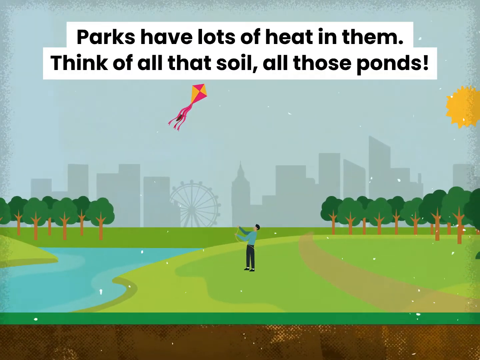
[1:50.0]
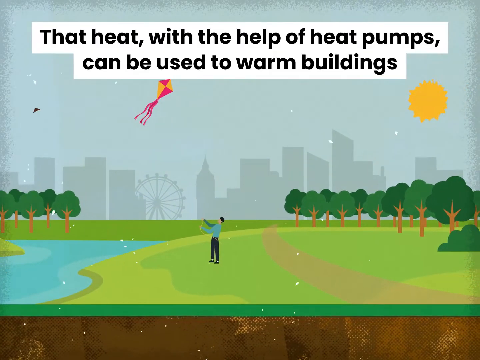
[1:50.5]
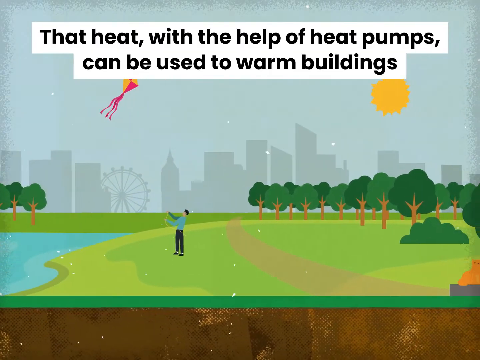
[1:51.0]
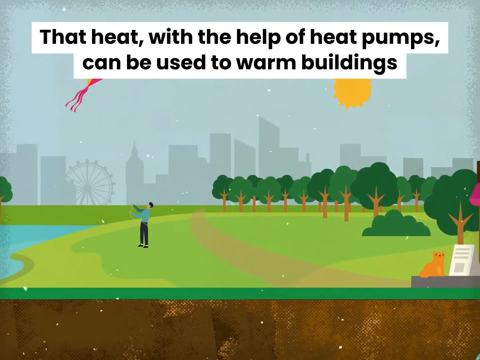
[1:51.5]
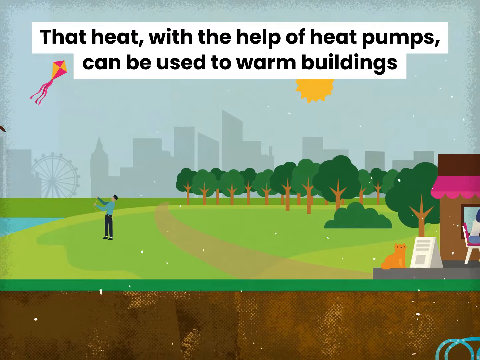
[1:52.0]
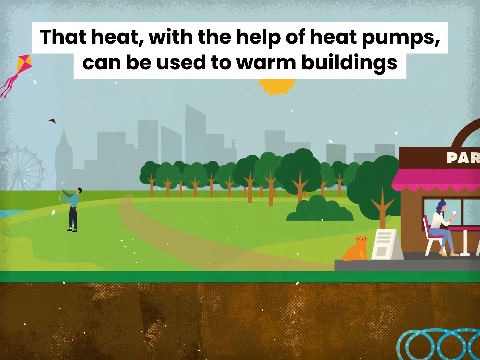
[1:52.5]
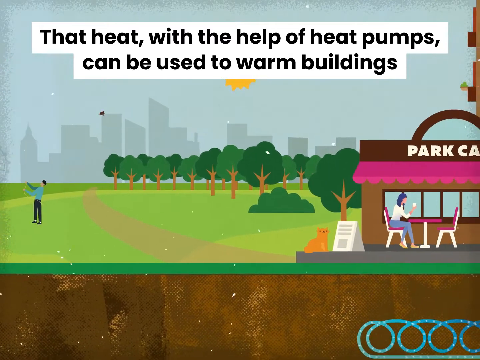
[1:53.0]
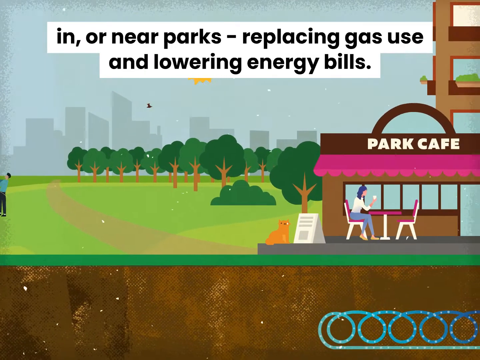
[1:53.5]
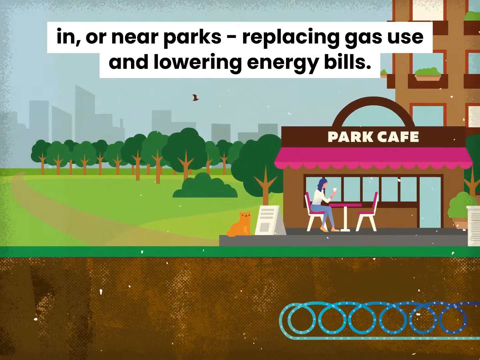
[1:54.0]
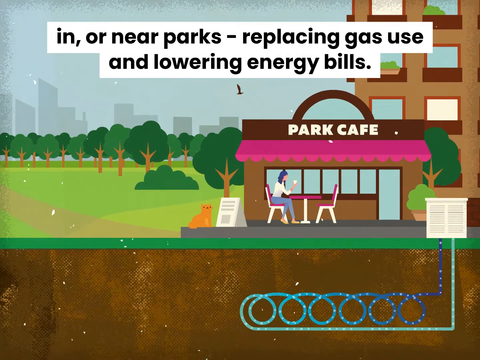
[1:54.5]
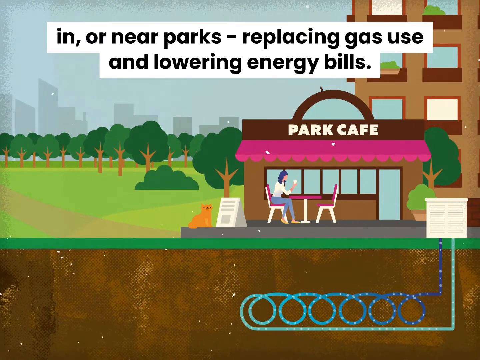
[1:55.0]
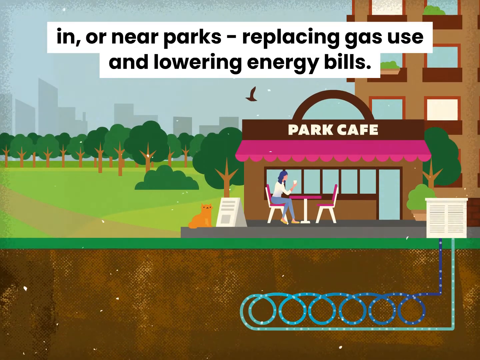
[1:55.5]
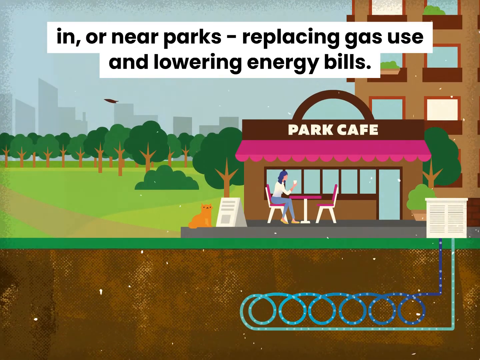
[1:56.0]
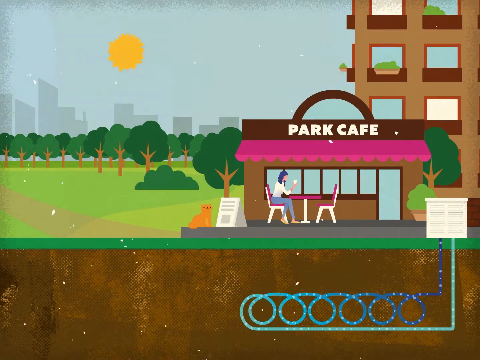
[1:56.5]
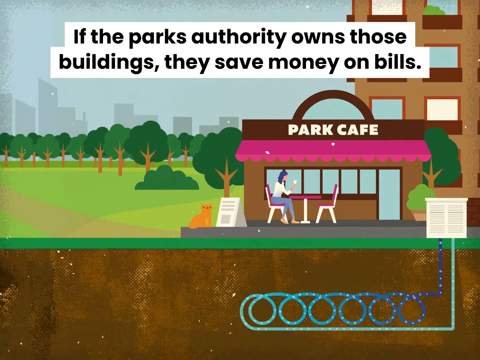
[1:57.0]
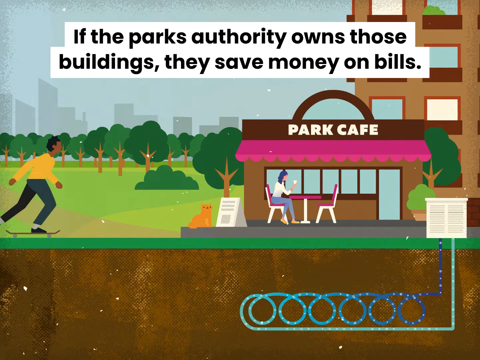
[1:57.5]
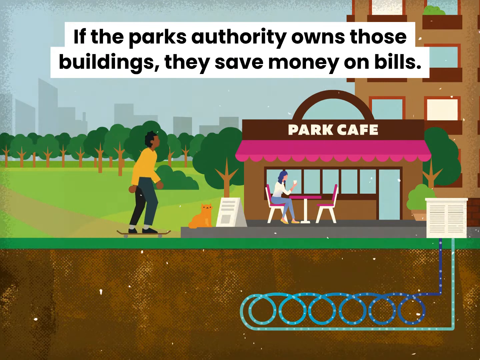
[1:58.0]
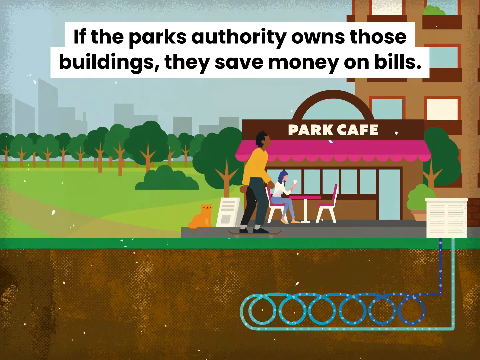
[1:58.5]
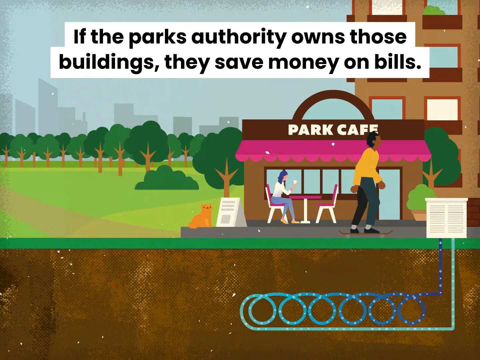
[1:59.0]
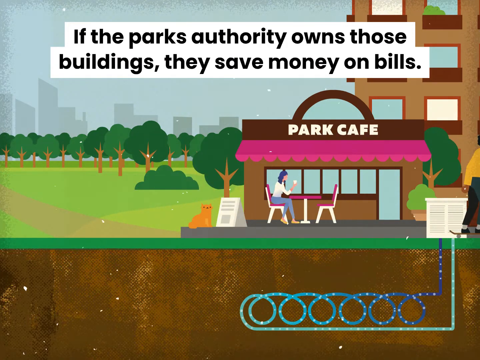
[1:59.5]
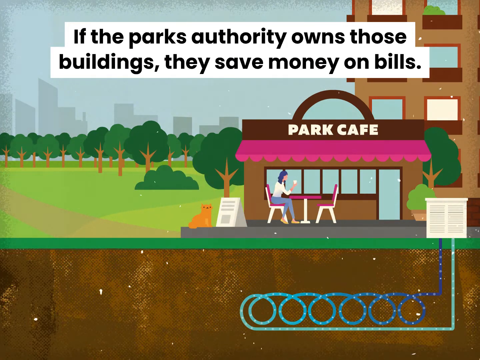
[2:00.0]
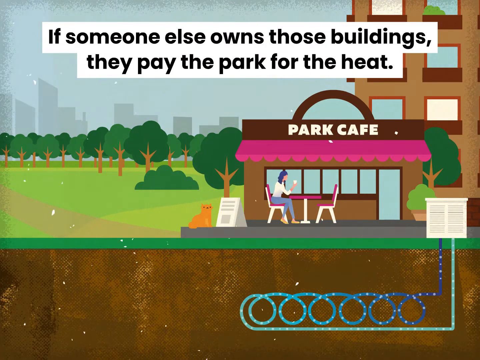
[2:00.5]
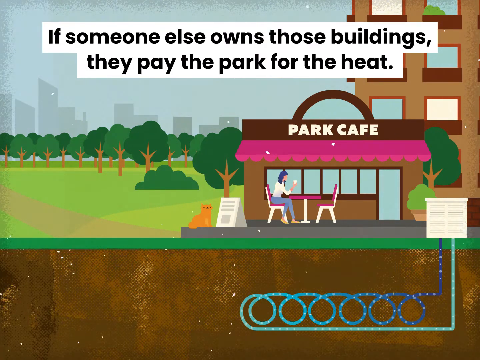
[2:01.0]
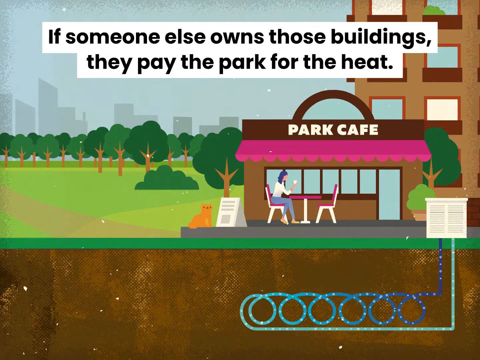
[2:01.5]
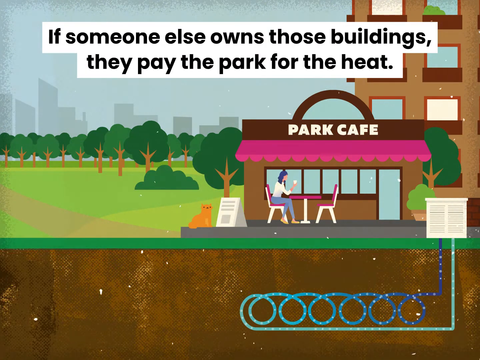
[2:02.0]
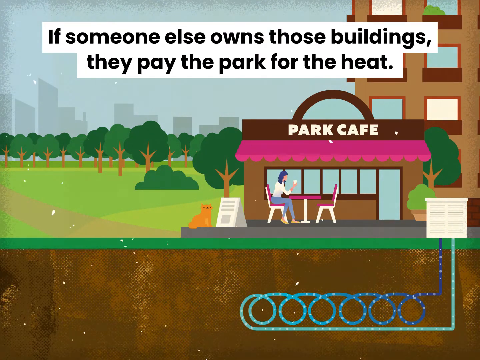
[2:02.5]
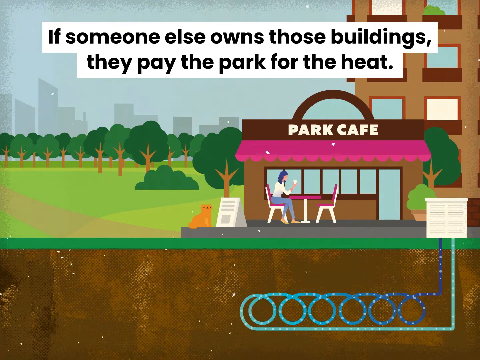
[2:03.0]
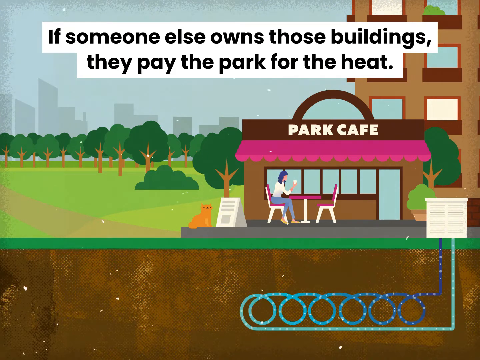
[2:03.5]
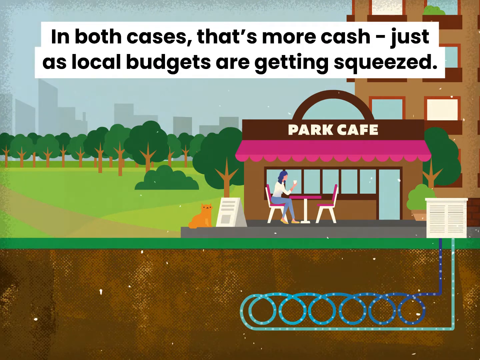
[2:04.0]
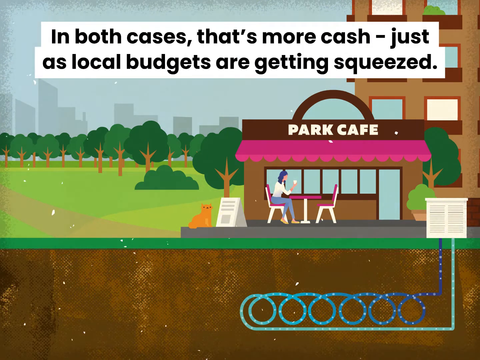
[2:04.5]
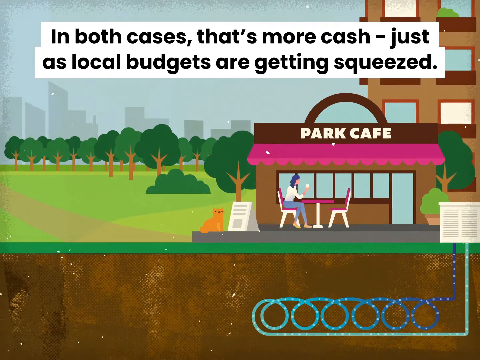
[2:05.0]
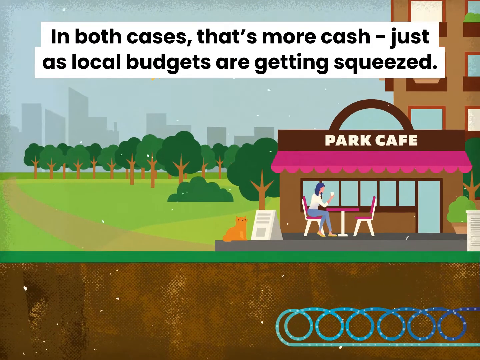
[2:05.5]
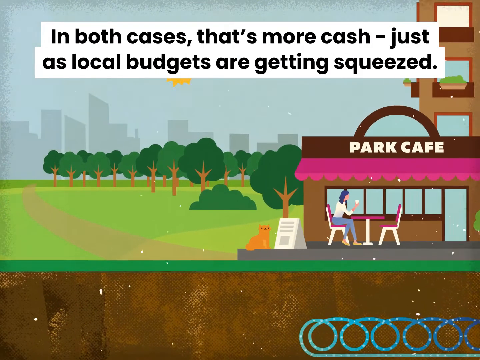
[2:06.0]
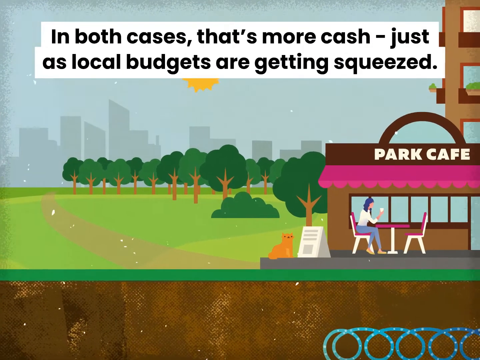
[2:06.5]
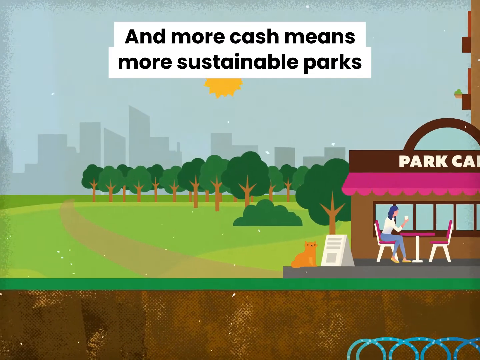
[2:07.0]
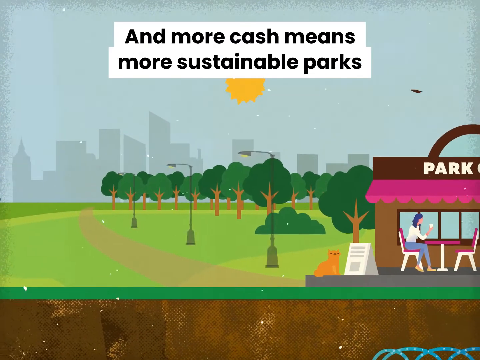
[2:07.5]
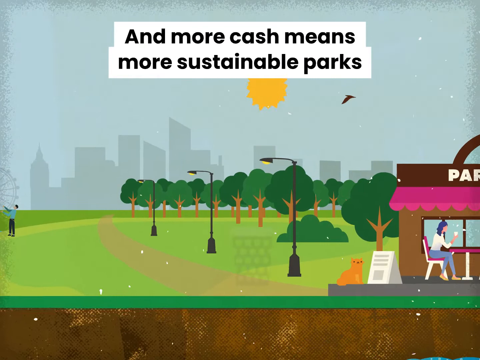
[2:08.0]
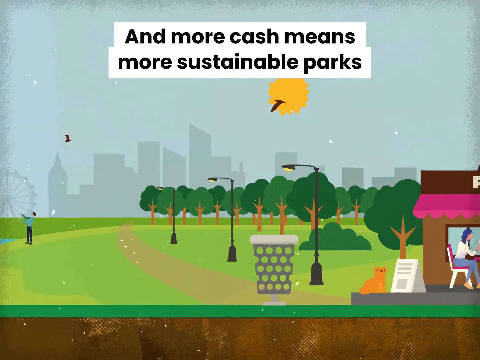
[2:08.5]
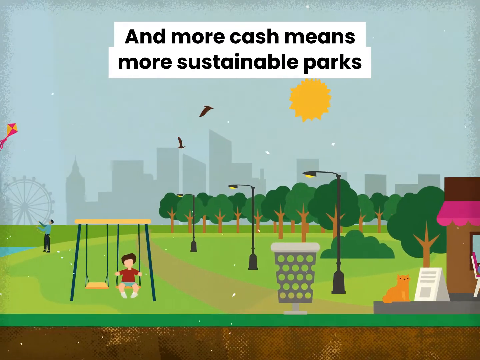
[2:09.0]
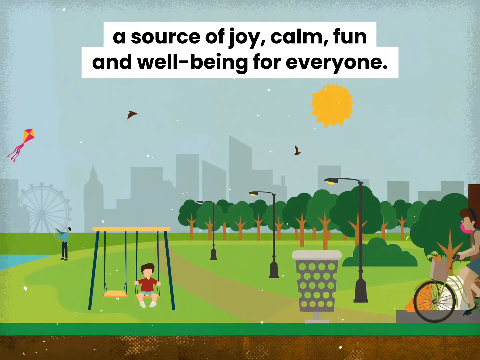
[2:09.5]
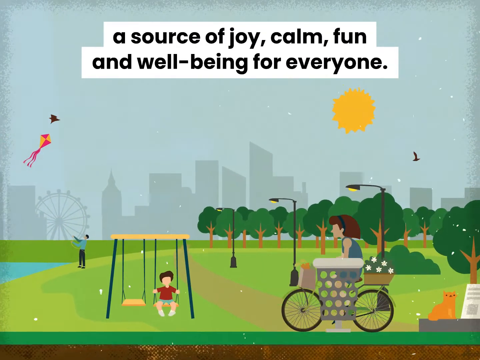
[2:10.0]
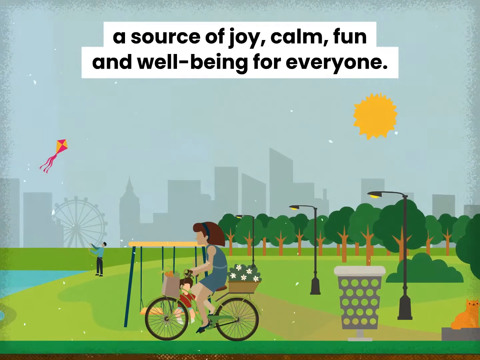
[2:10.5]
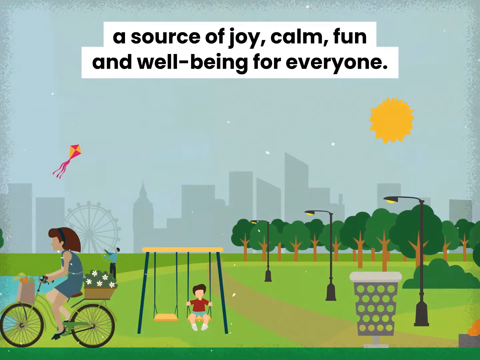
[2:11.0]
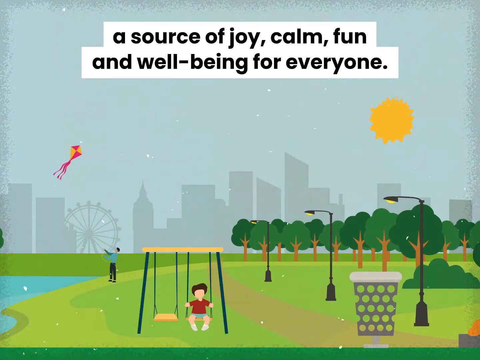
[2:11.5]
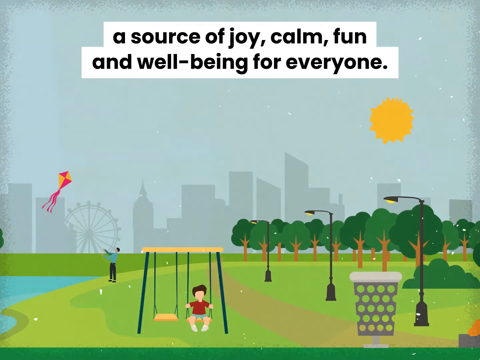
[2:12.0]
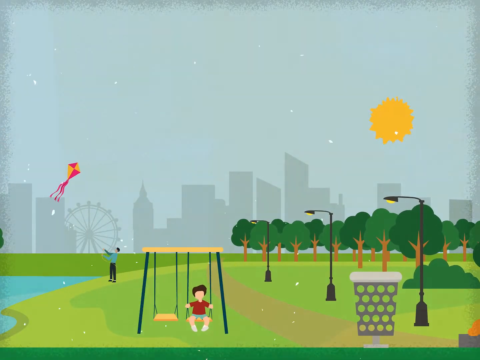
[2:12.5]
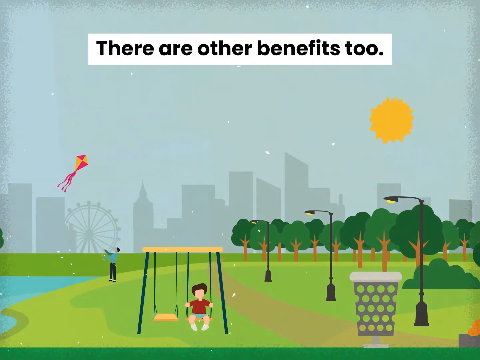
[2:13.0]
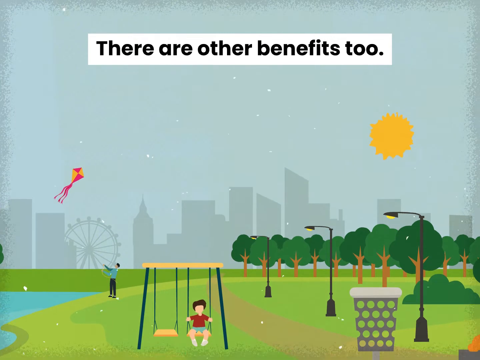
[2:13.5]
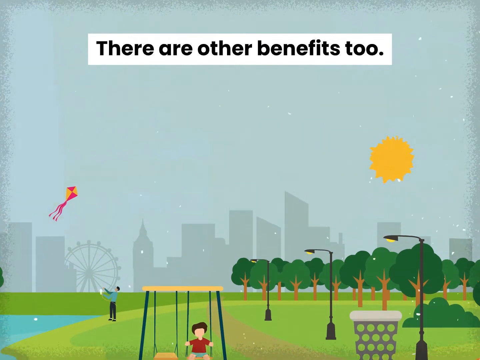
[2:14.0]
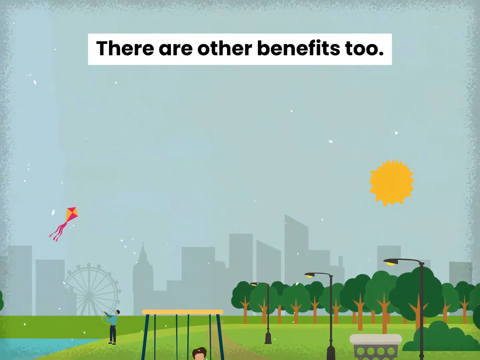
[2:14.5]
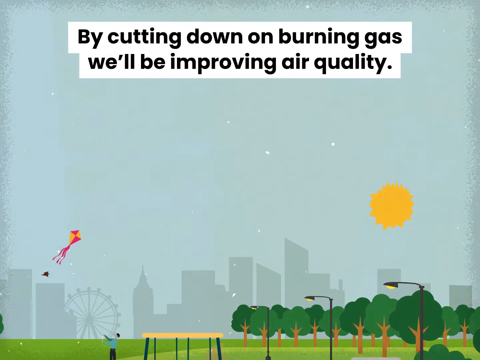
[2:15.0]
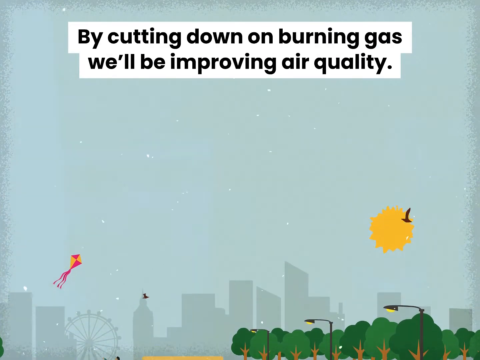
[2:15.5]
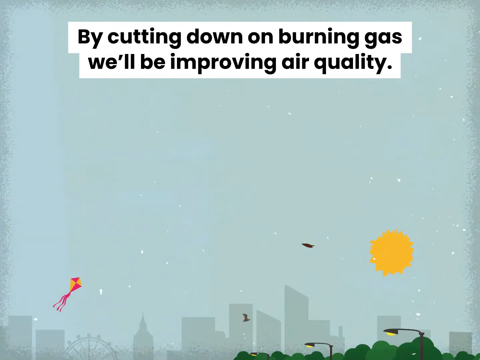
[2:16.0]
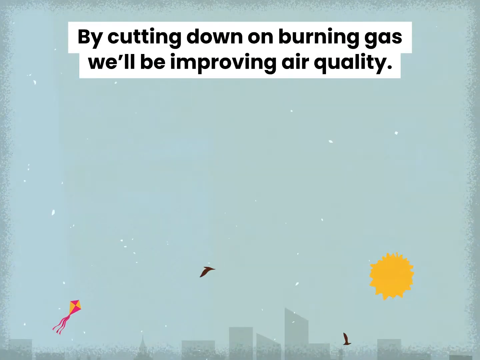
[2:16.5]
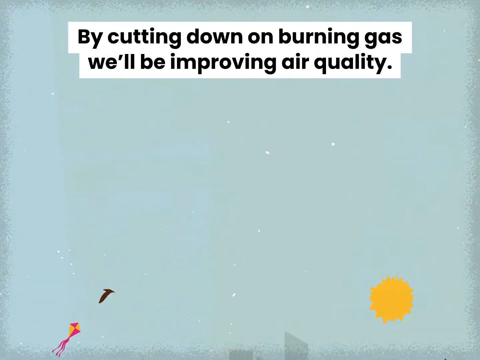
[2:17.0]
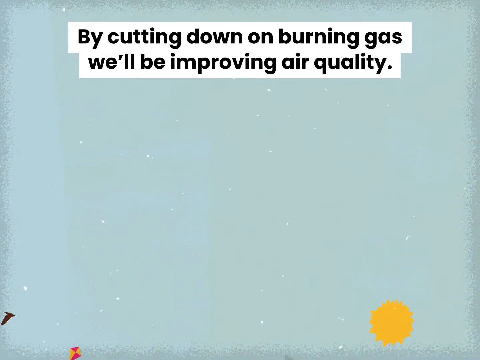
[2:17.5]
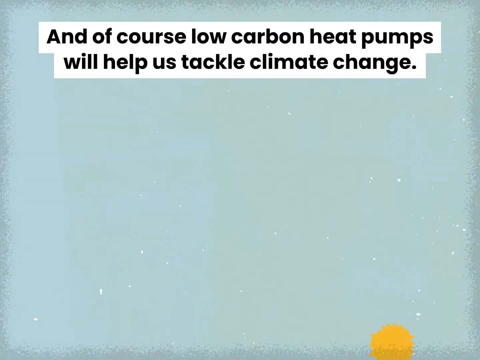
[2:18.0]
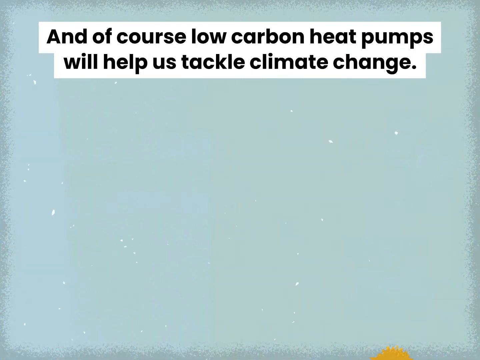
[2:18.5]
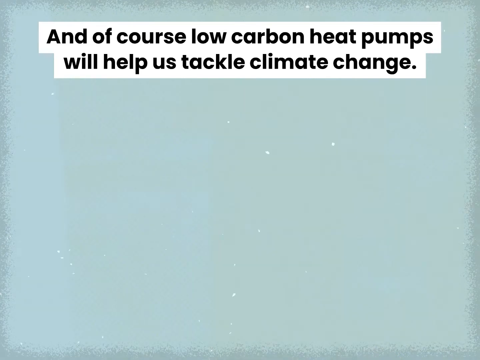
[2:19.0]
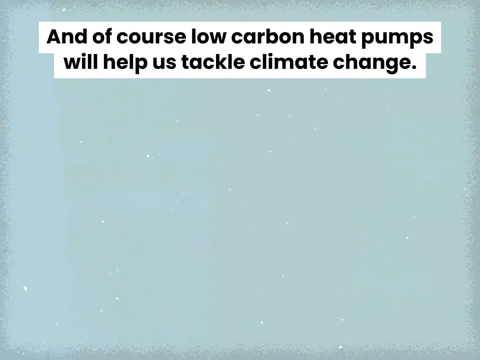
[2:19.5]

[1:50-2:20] Subtitles appear at the top, reading "parks have a lot of heat in them, think of all that soil, all those ponds," as a visual shows a guy in light blue flying a kite in the park. The text then reads "that heat, with the help of the heat pumps, can be used to warm buildings," and what looks like a park cafe and another building are shown. Further subtitles read "If the parks authority owns those buildings, they save money on bills. If someone else owns those buildings, then they pay the park for the heat. In both cases, that's more cash," followed by "A source of joy, calm, fun, and well-being for everyone. There are other benefits too, like cutting down on burning gas, improving air quality, and of course low carbon heat pumps will help us tackle climate change." At the top of the screen, the sky looks very blurry and somewhat grayish.